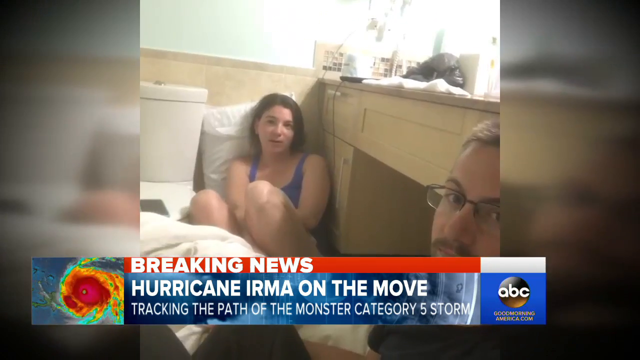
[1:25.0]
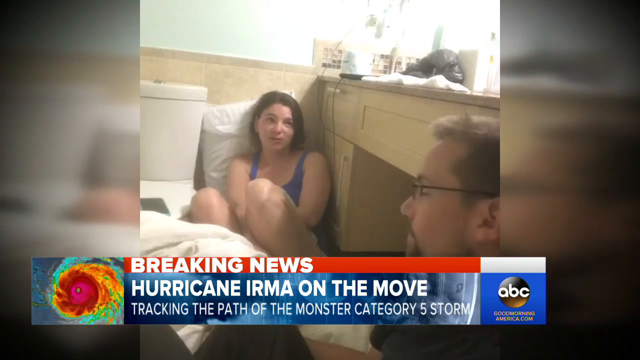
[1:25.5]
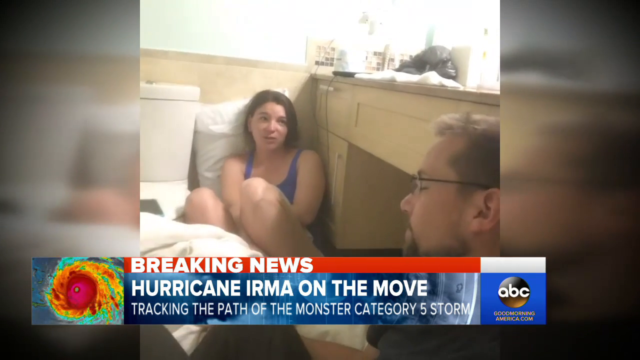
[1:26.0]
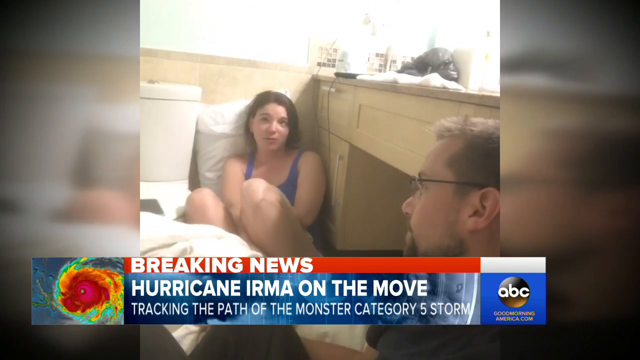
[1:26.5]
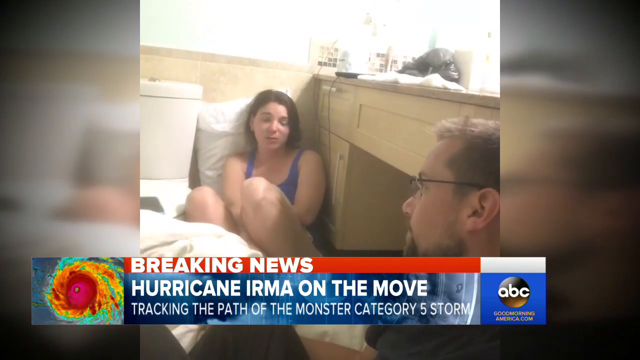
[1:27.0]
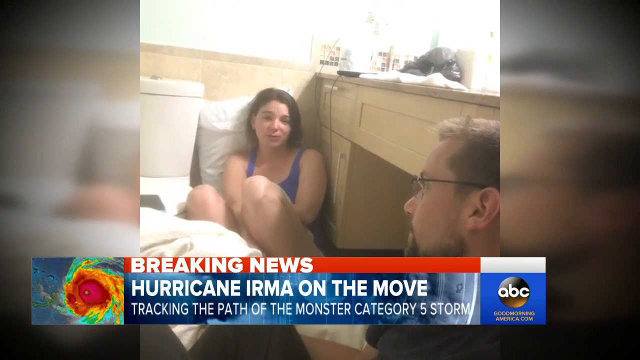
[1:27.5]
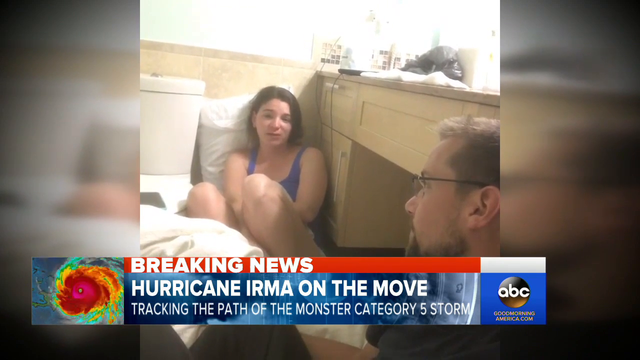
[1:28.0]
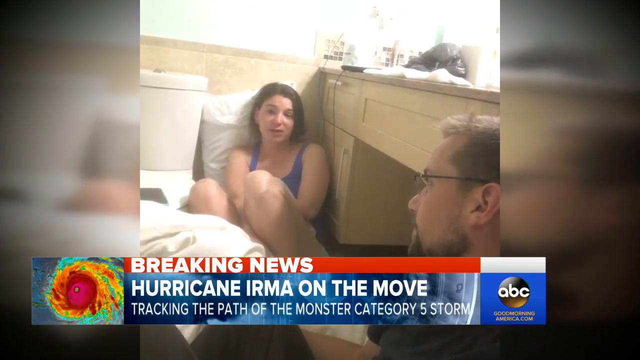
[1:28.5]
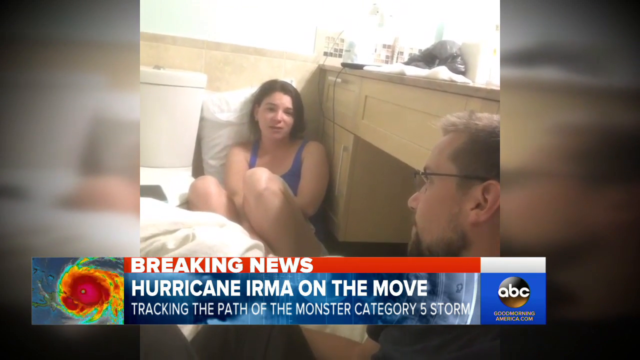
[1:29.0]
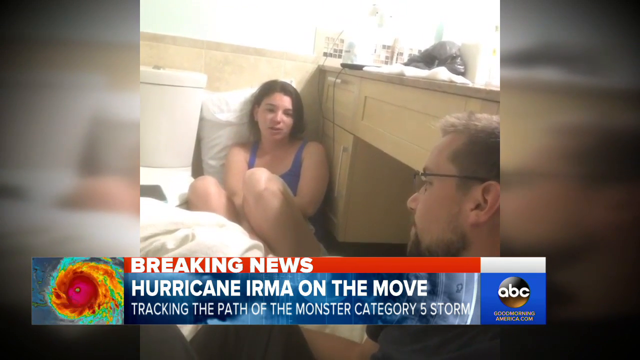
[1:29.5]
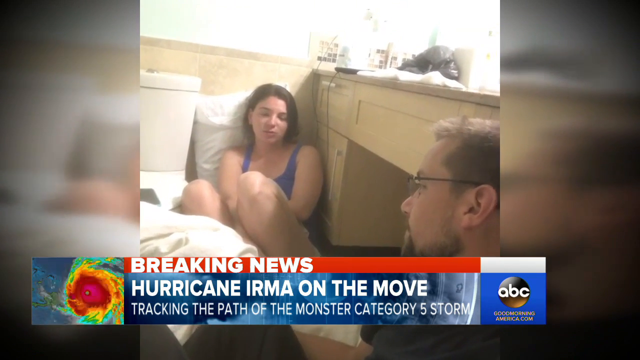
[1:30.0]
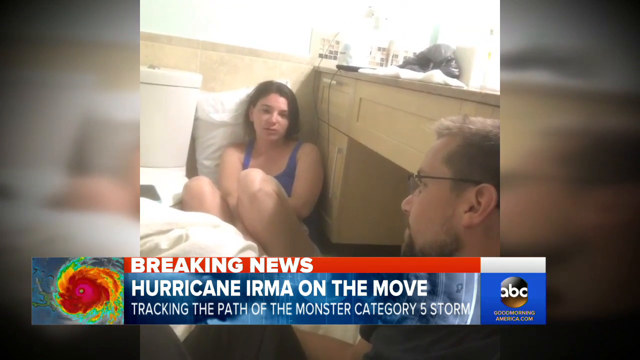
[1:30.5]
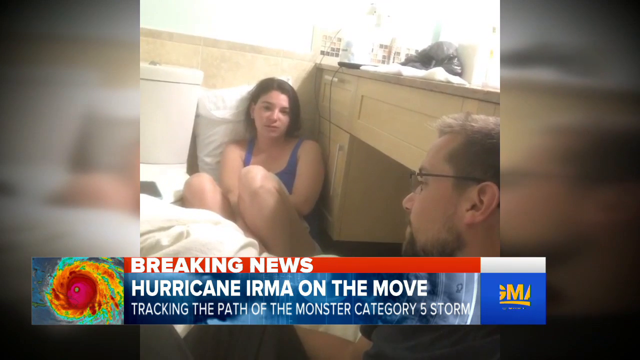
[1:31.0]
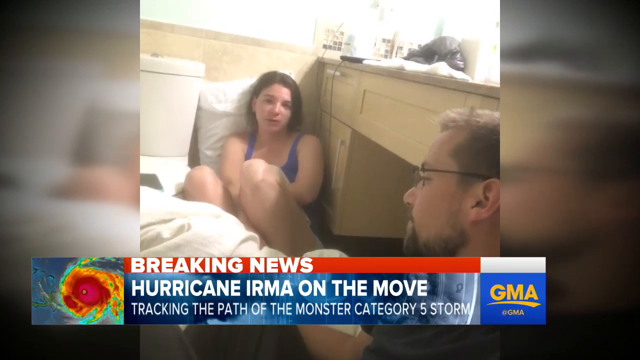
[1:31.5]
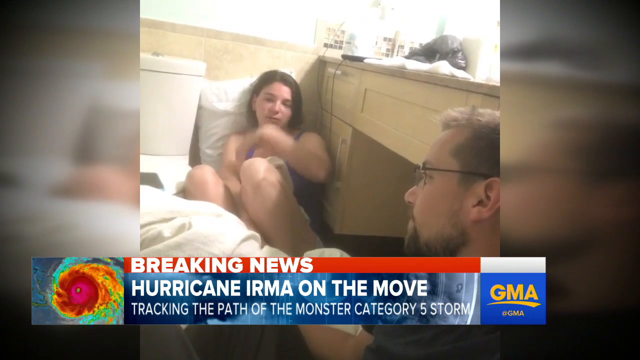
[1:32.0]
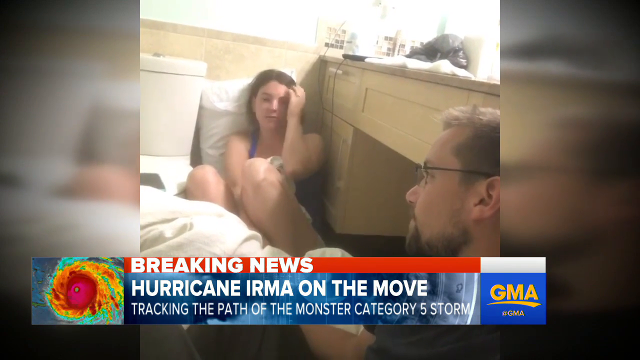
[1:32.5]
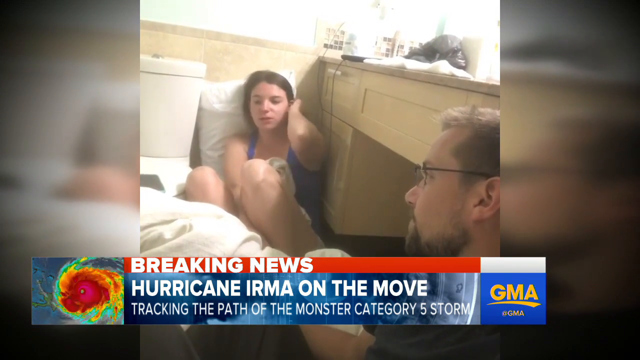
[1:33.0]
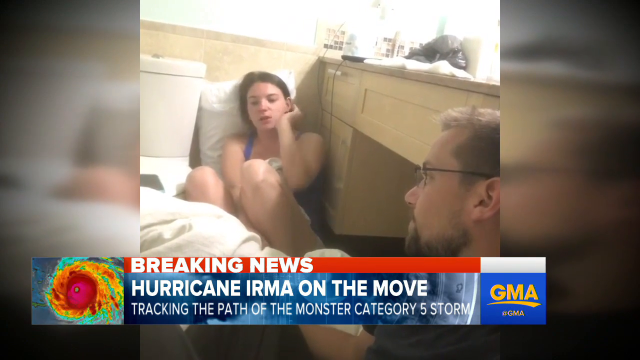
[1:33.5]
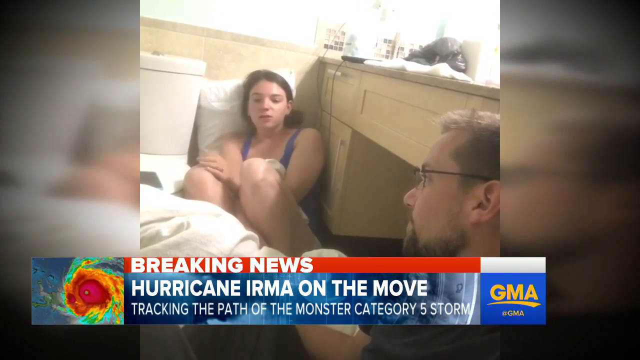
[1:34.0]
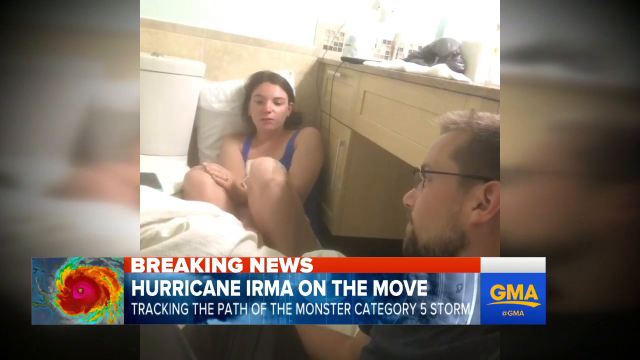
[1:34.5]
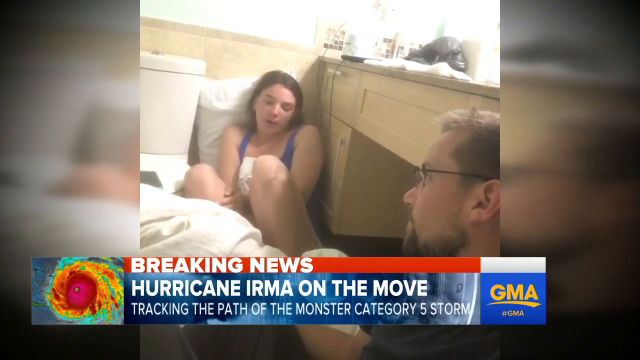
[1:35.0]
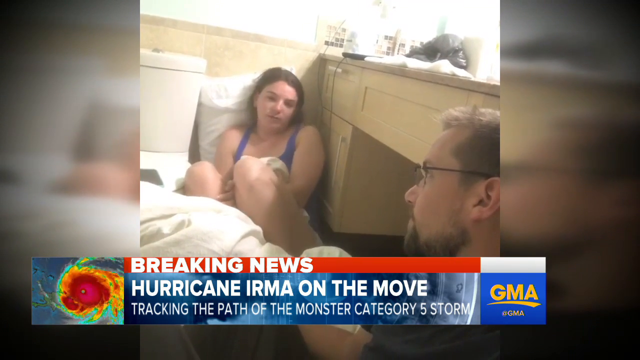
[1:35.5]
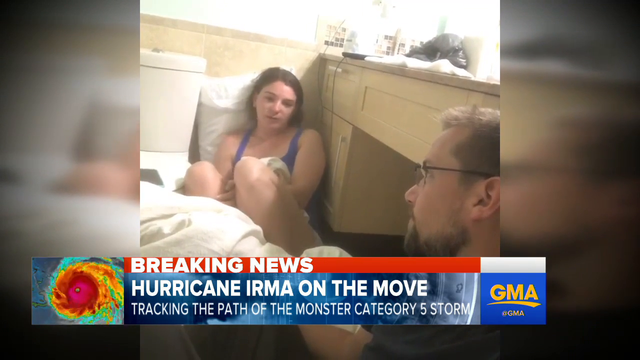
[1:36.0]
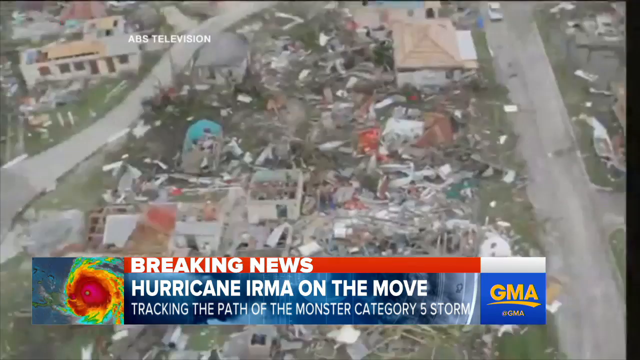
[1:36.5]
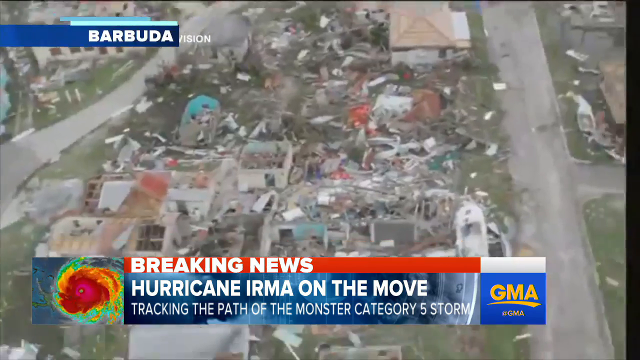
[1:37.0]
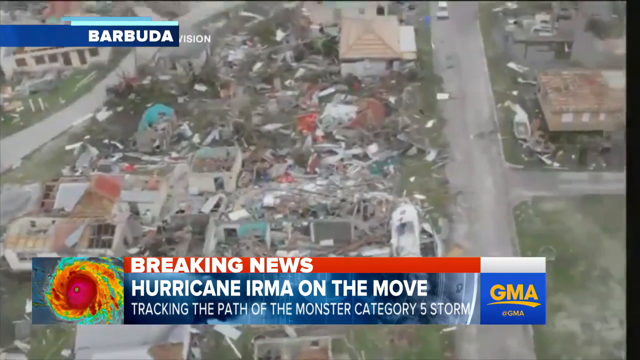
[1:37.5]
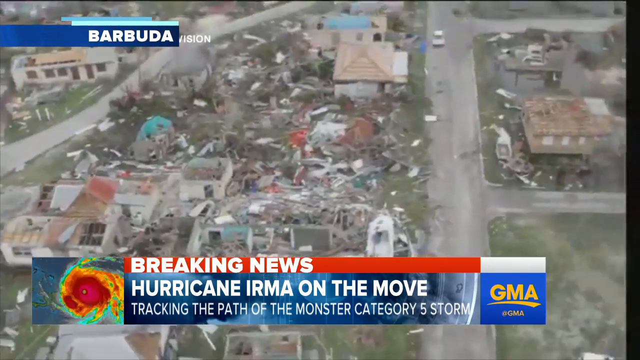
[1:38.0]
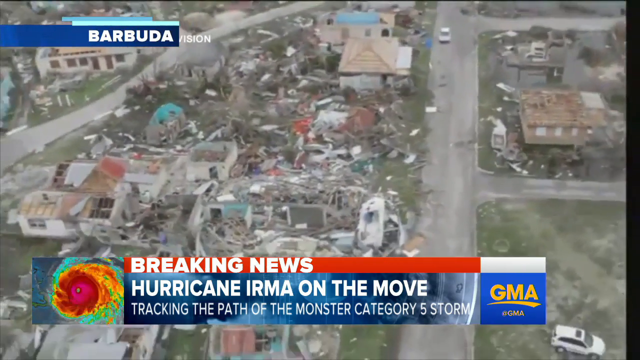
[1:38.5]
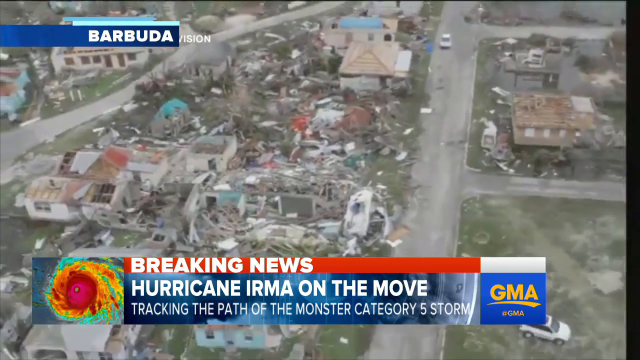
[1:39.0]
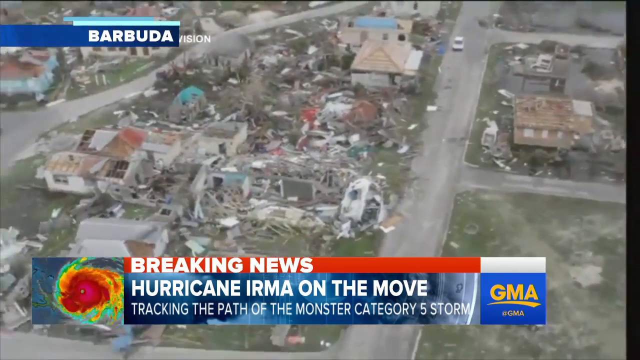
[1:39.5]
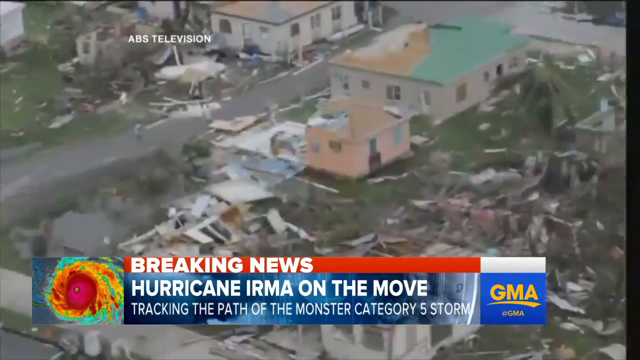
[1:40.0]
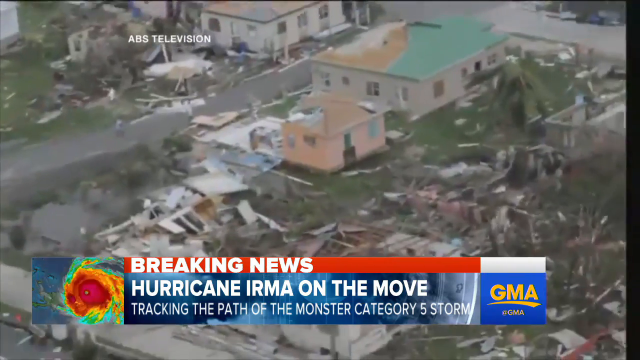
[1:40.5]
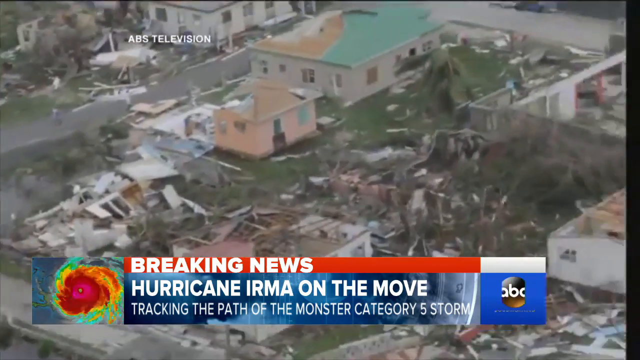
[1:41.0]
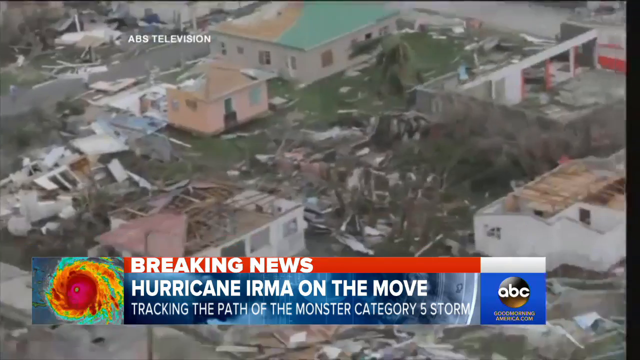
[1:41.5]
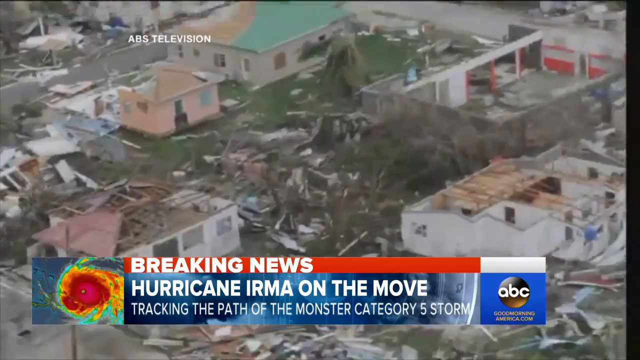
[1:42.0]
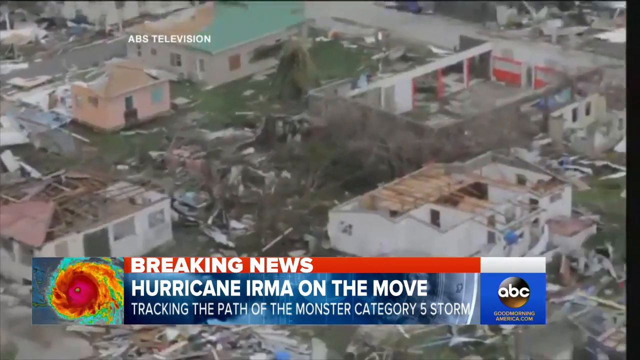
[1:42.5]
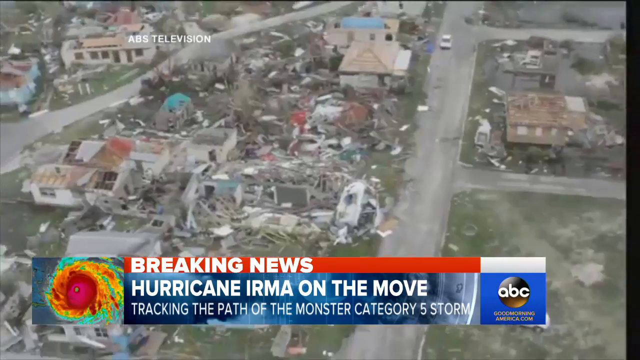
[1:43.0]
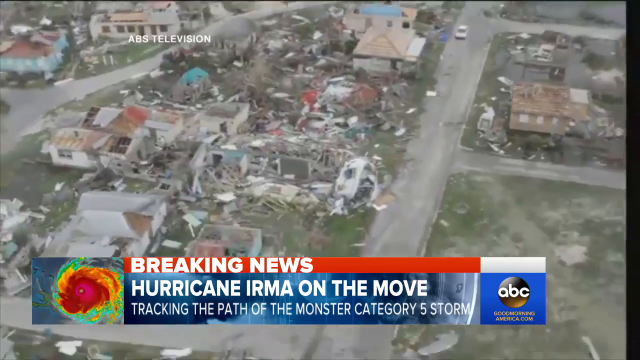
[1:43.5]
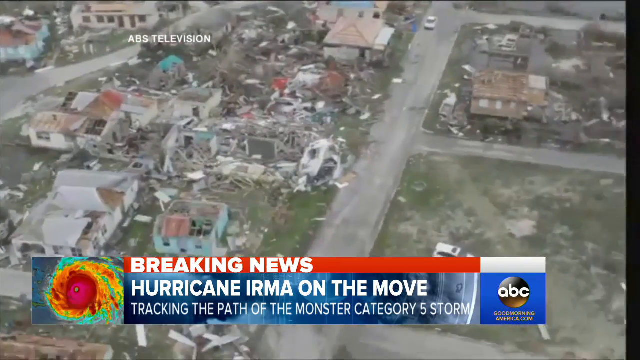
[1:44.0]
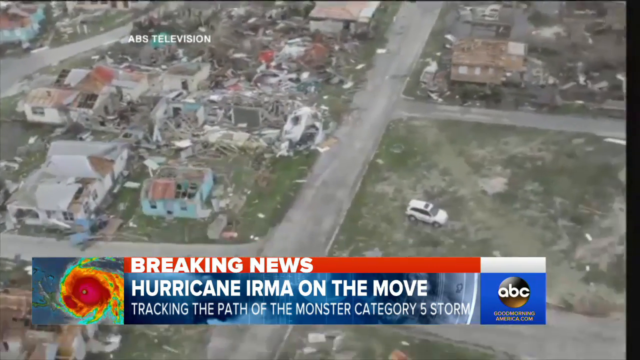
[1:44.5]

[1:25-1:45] In footage of Hurricane Irma, a couple sits on the floor being interviewed in what looks like their bathroom at a hotel or resort, maybe trying to keep dry from the storm. The woman has a pillow behind her, and the man looks like he is sitting somewhat relaxed and in a pretty good mood. What looks like a countertop is in front of them, with a solid top and a wood-like base. An aerial view shows what looks like the effects of the storm: many affected buildings, lots of debris everywhere, and many houses that look like their roofs have come off. The roads have no cars or vehicles on them, with some cars off to the side. The area looks pretty tropical, with an island-like appearance and more dirt roads than asphalt roads.